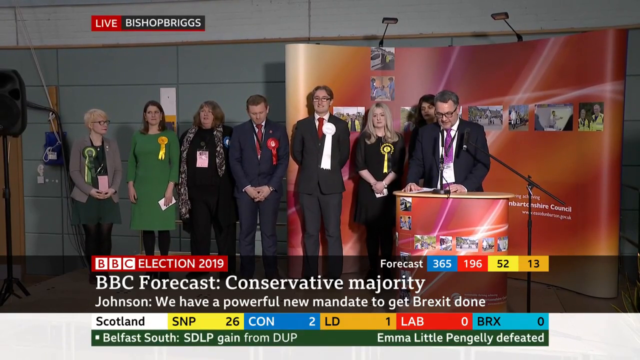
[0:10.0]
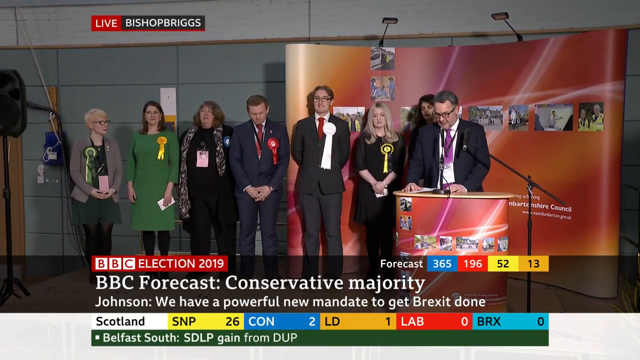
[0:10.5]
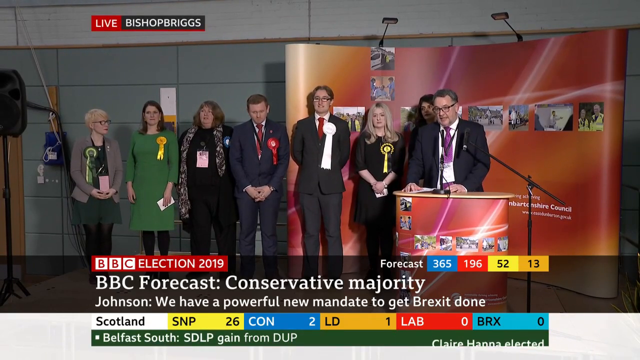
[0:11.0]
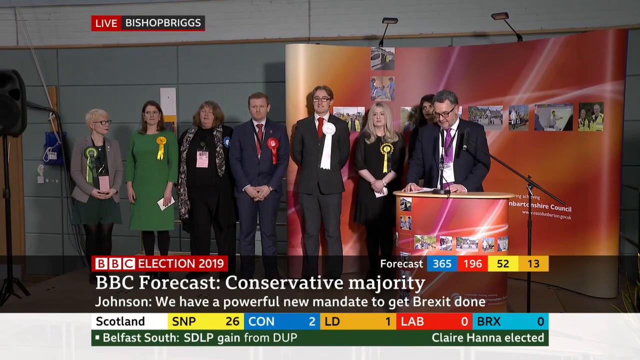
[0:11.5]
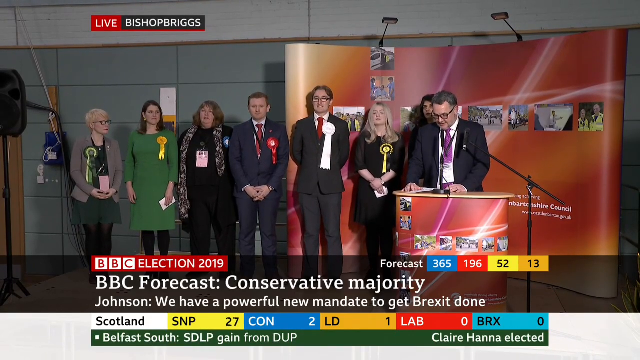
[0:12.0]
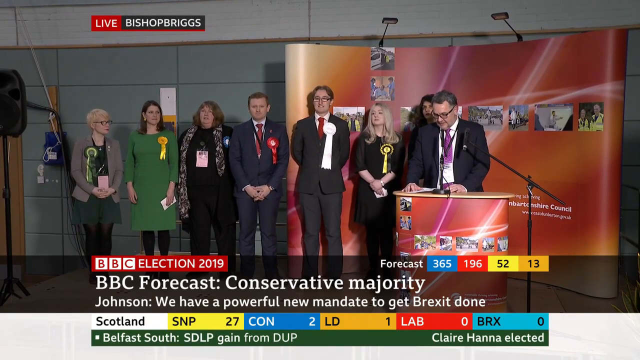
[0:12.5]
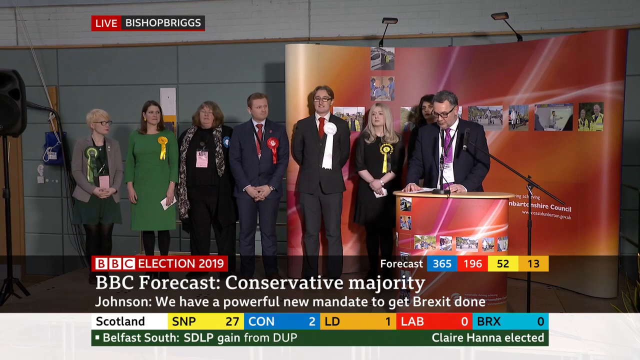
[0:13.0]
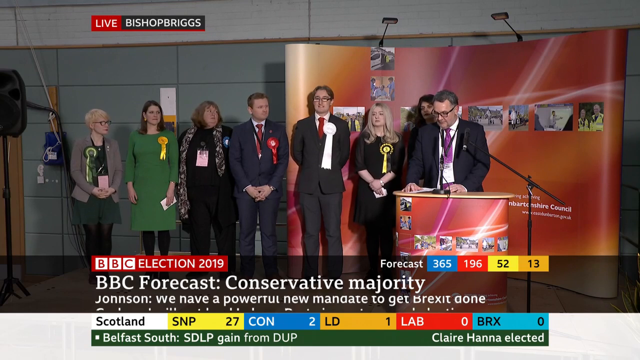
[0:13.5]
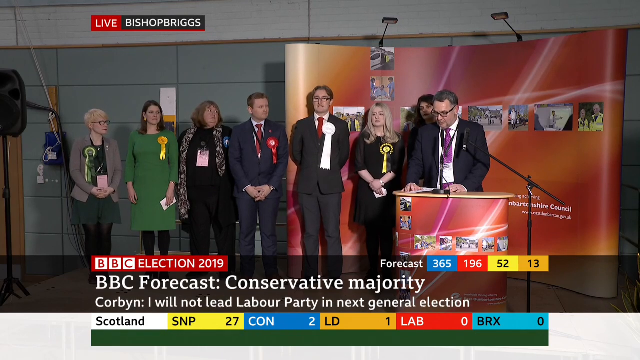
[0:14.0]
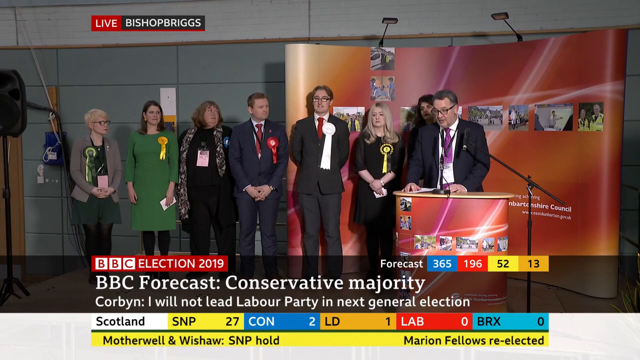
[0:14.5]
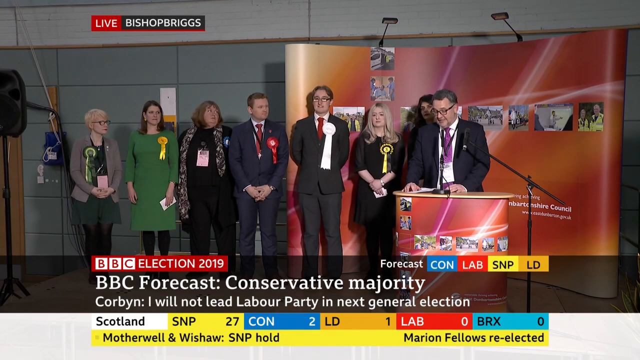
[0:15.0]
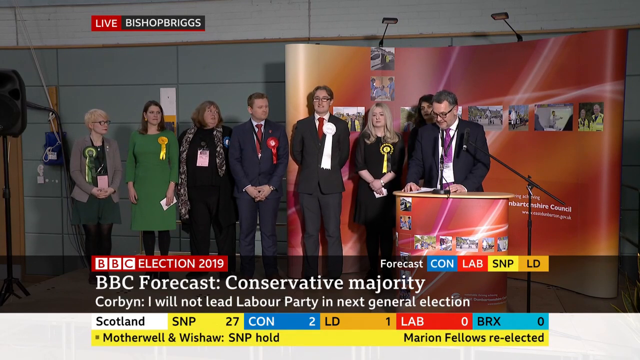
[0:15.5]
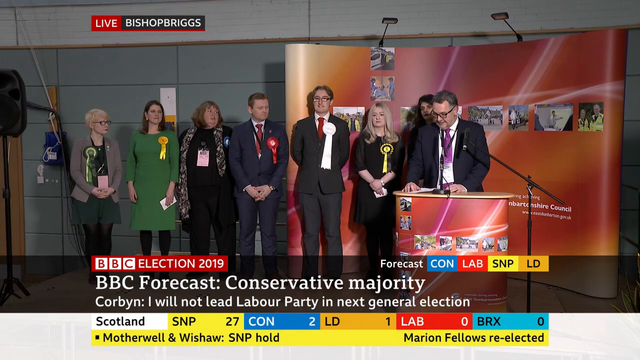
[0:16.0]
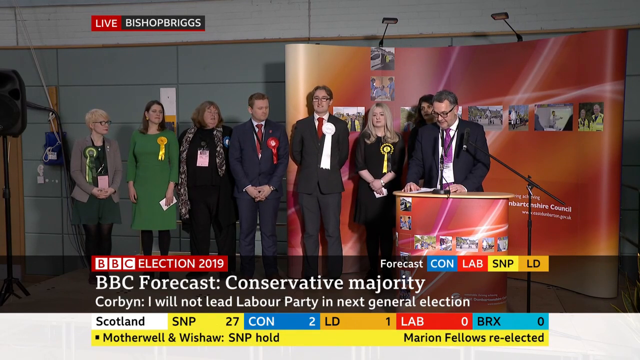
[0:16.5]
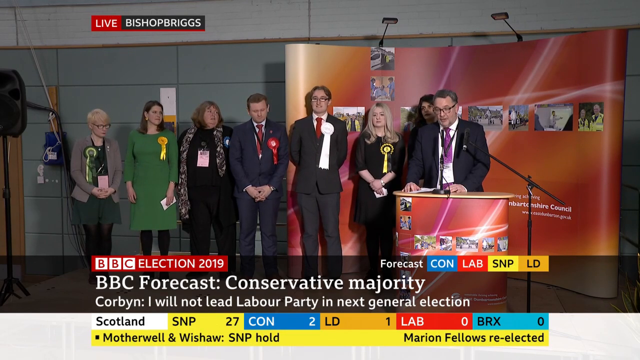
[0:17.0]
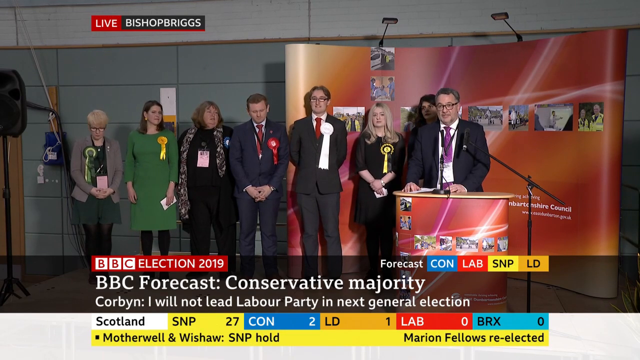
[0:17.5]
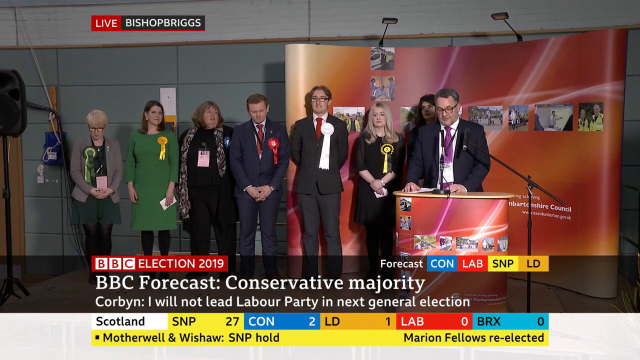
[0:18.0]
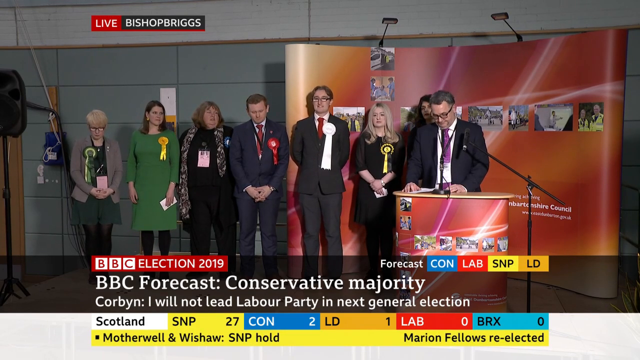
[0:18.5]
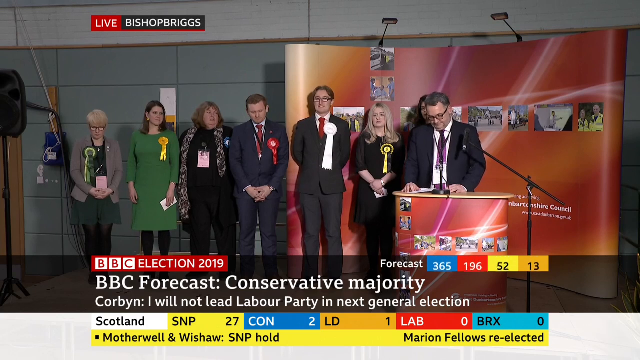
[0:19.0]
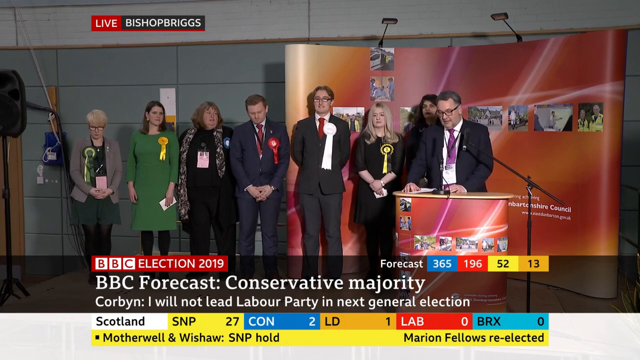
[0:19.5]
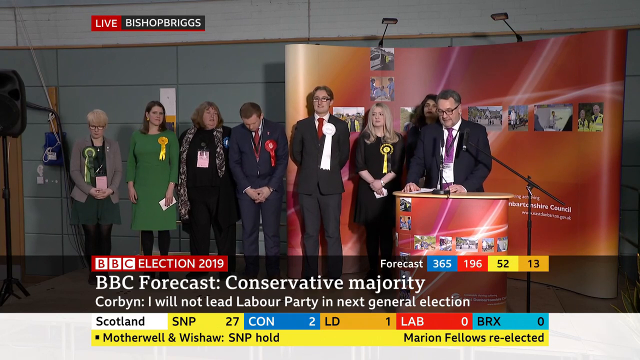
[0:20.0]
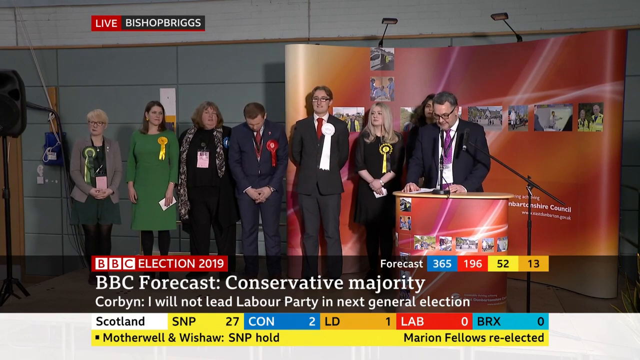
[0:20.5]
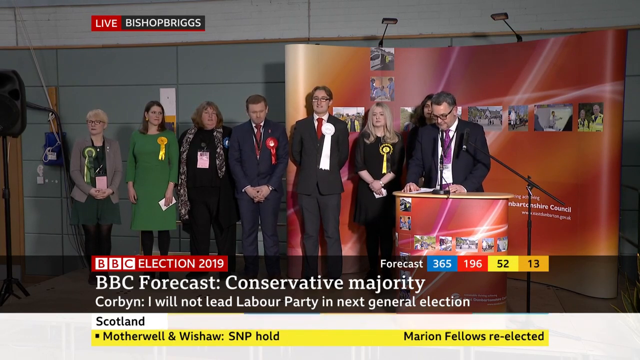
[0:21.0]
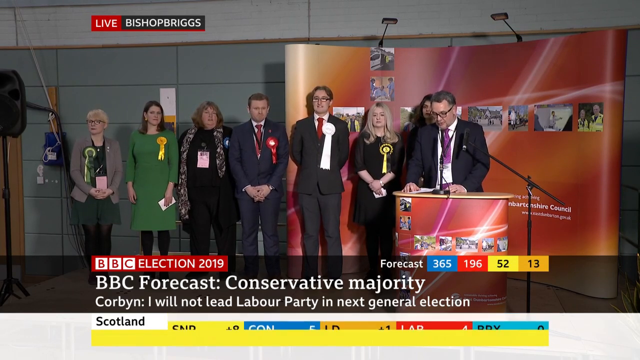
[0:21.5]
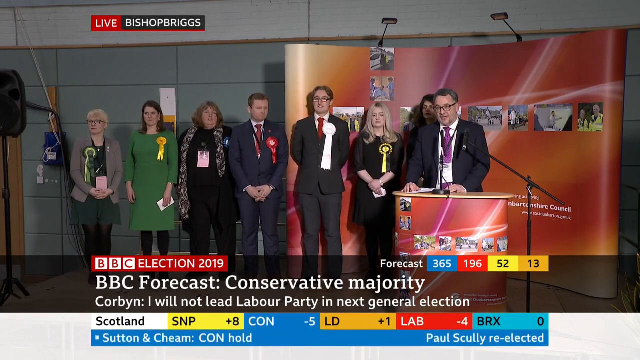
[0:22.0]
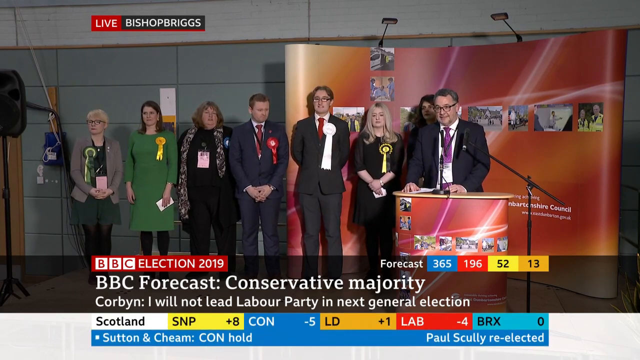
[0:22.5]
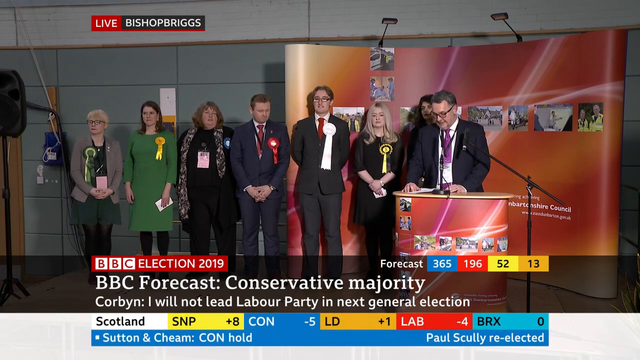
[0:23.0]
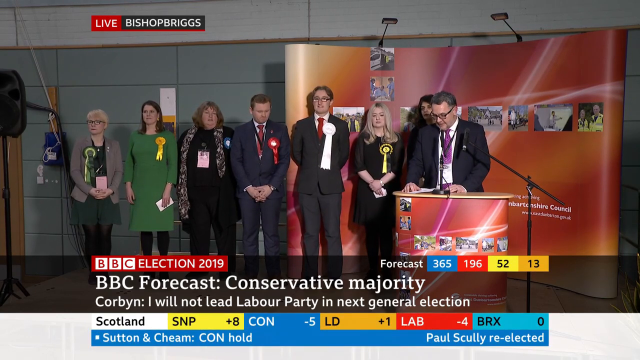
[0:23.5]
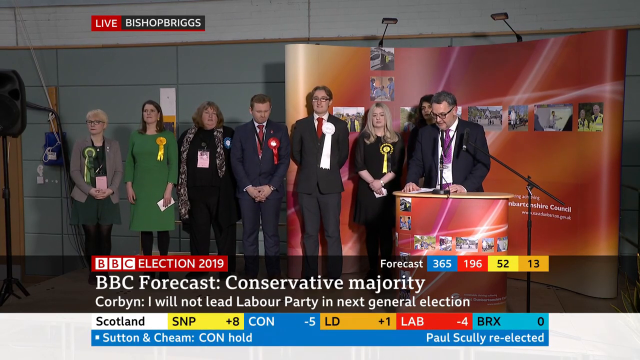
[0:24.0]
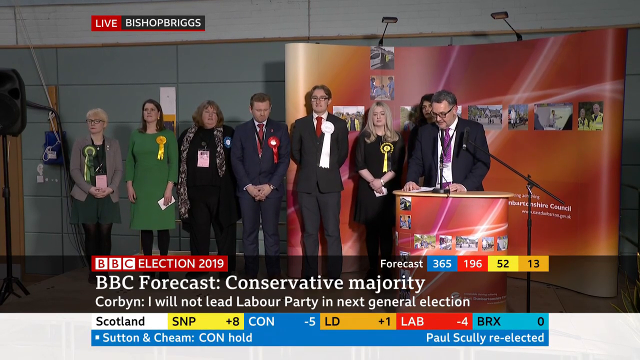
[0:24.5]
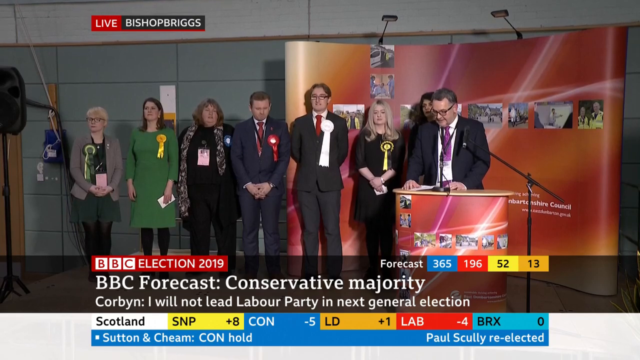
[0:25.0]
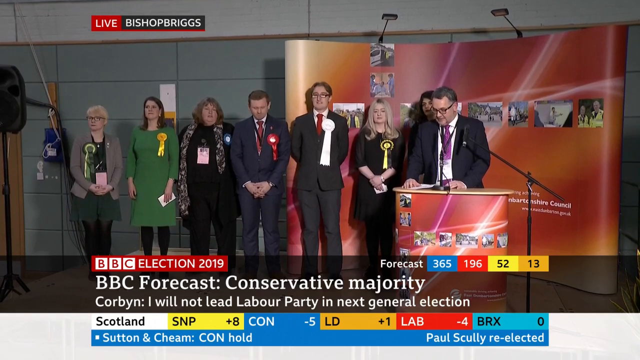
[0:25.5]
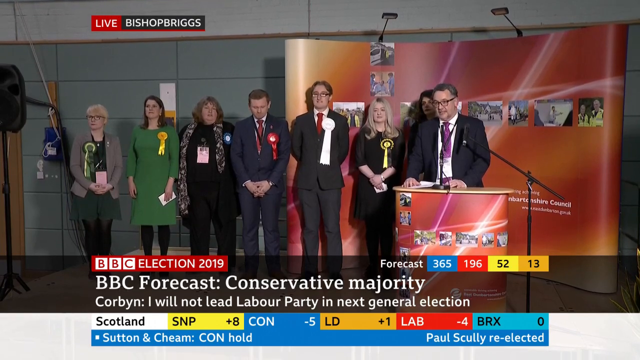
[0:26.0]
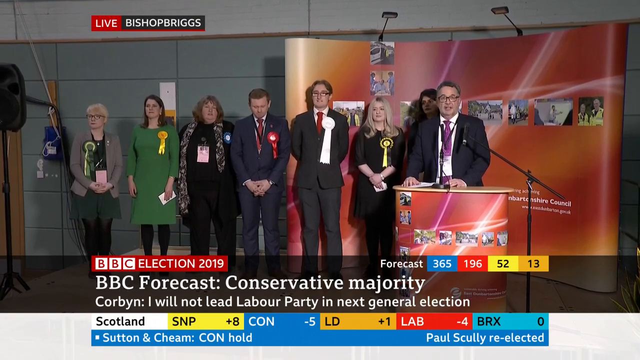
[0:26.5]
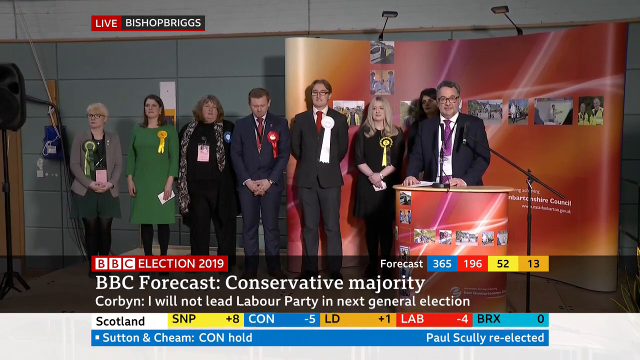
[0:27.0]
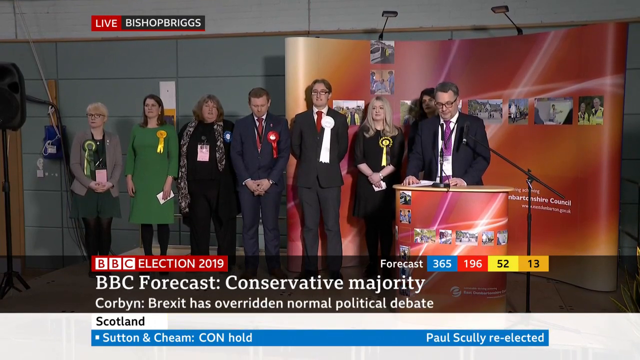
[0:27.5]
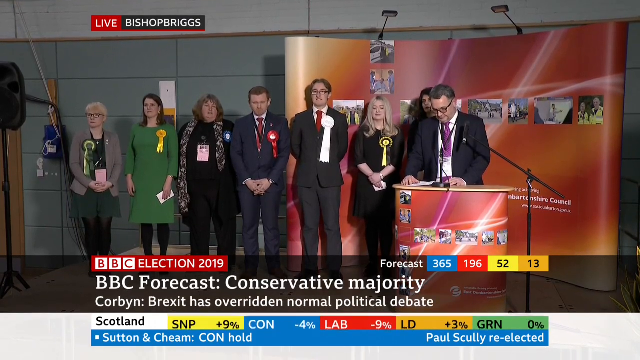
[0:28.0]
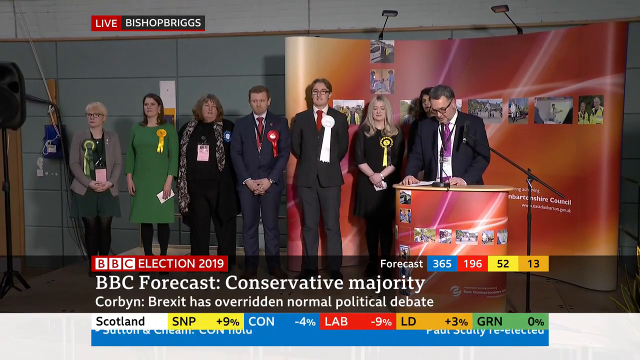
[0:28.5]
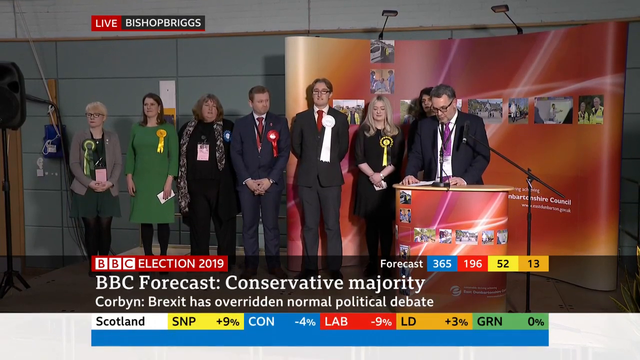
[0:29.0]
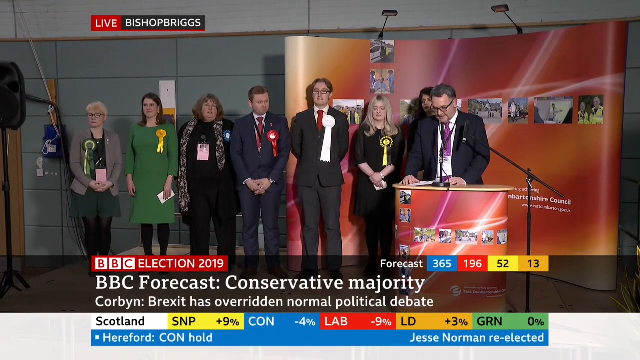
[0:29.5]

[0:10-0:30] Eight people are now standing on the stage. What appears to be a council logo is at the bottom right of the backdrop behind them. Photos of different people, some wearing reflective vests, are placed on an orange, gold and somewhat pink striped or embossed background. Information runs along the bottom of the screen: a forecast of 365 for blue, 196 for red, 52 for yellow and 13 for gold. Below that, "Scotland" appears in white, followed by "SNP +8 CON -5 LD +1" and further figures. These numbers change, apparently updating as election results are reported.